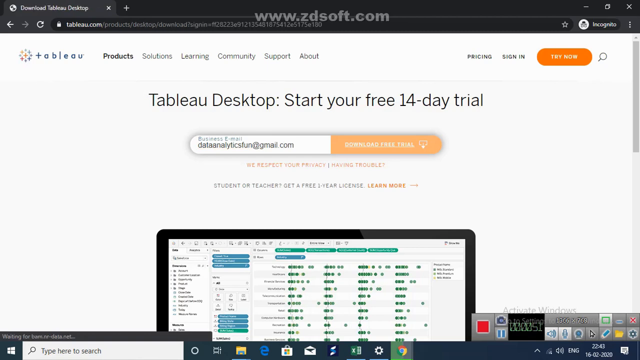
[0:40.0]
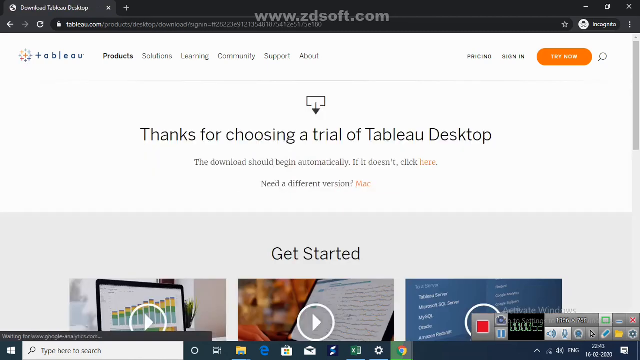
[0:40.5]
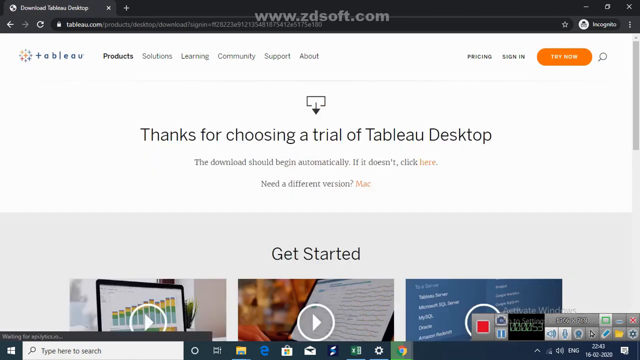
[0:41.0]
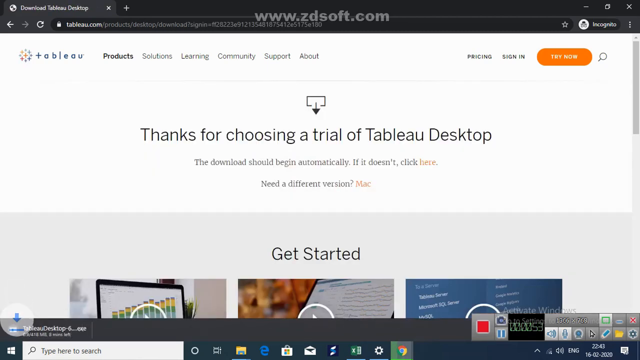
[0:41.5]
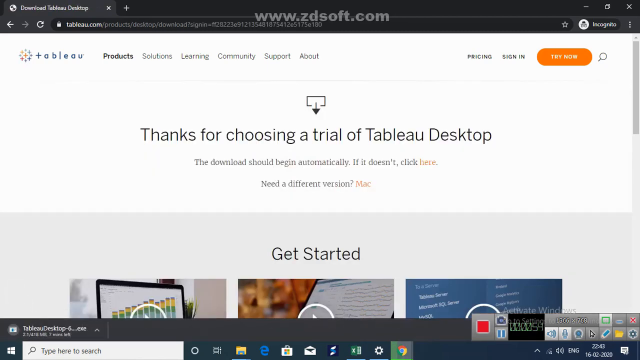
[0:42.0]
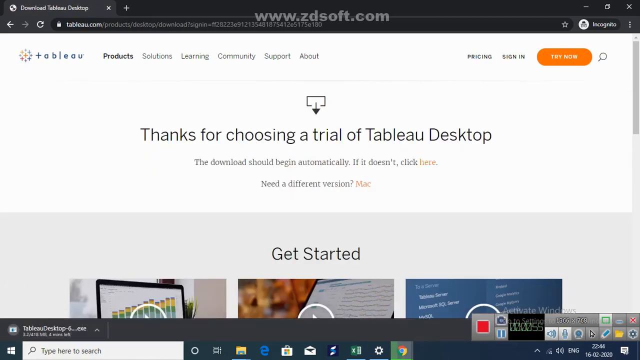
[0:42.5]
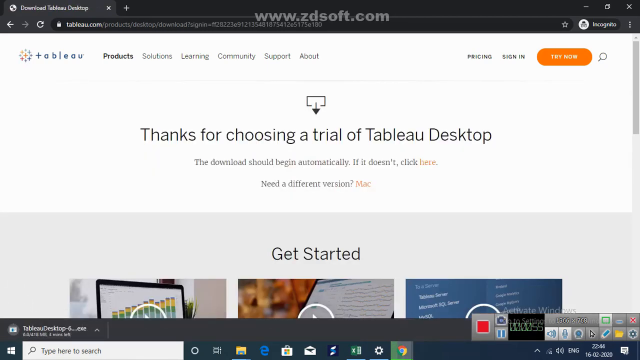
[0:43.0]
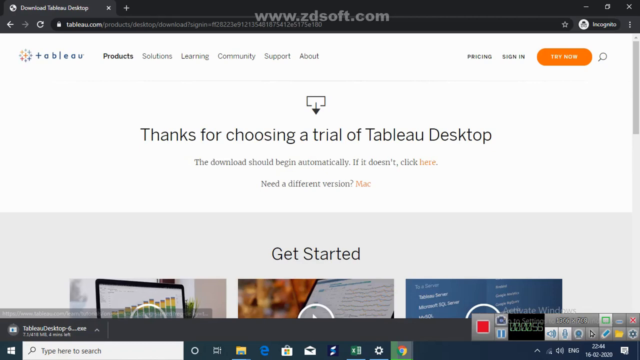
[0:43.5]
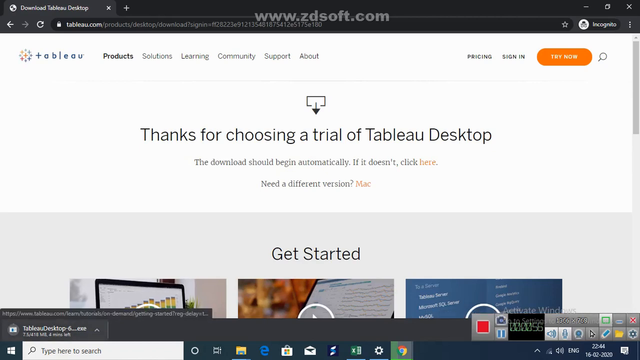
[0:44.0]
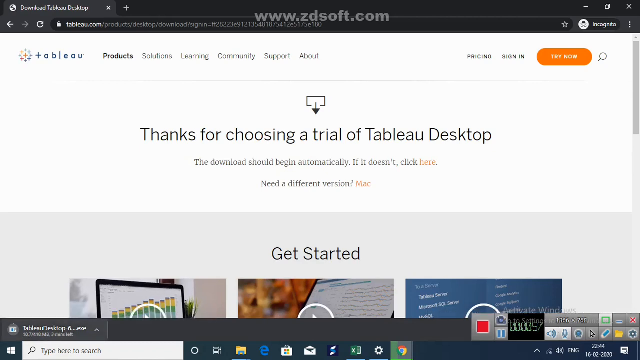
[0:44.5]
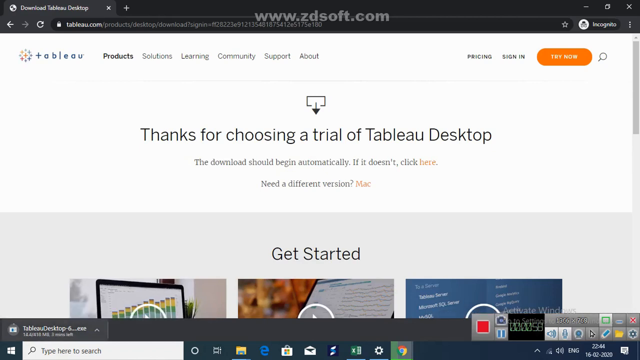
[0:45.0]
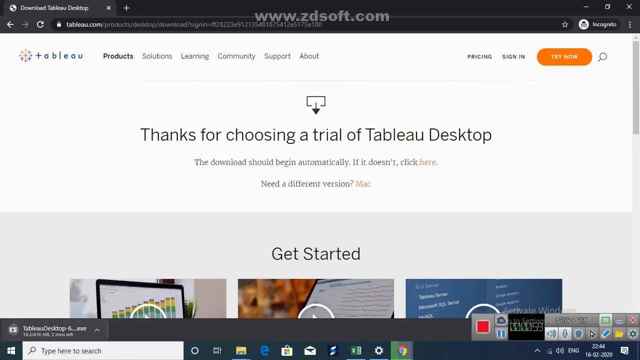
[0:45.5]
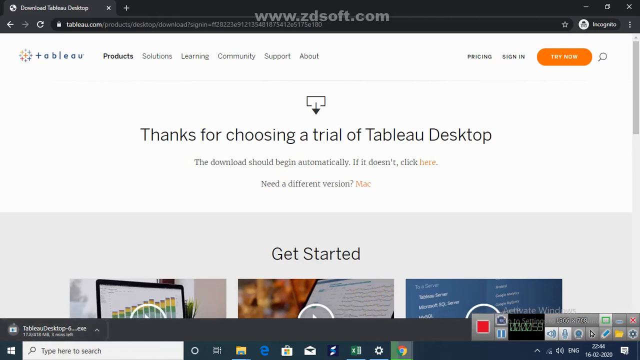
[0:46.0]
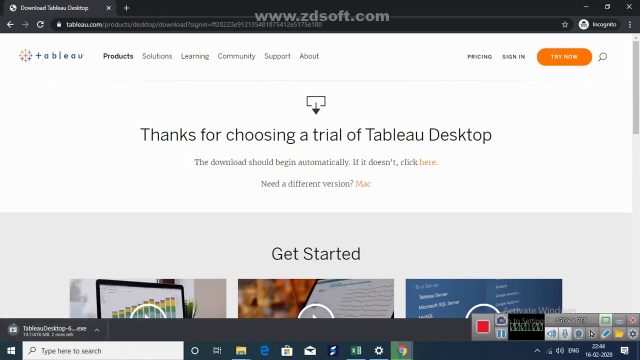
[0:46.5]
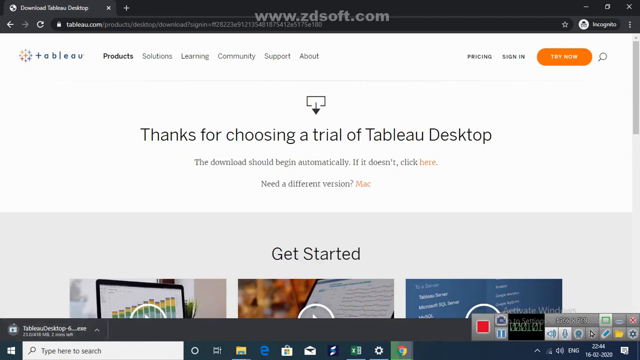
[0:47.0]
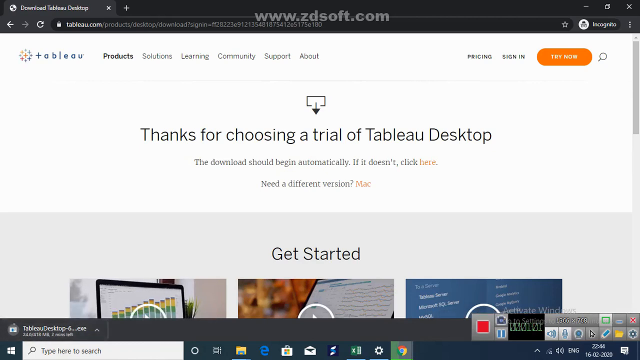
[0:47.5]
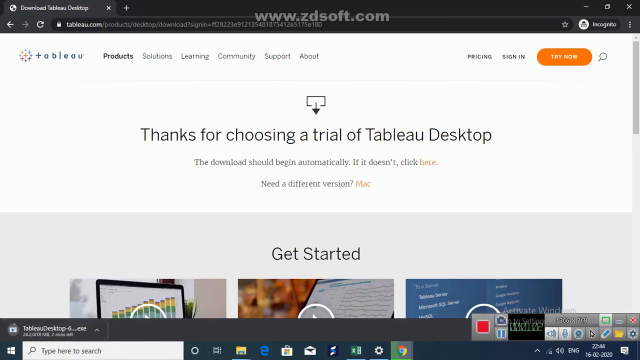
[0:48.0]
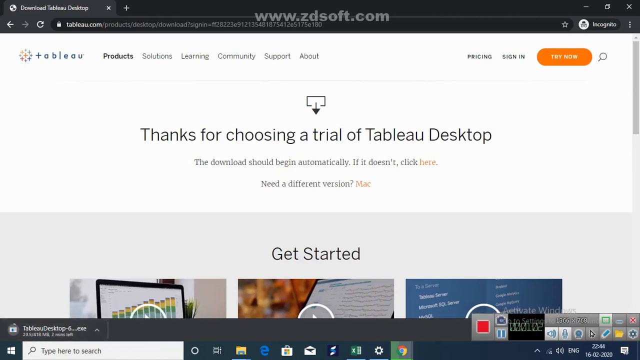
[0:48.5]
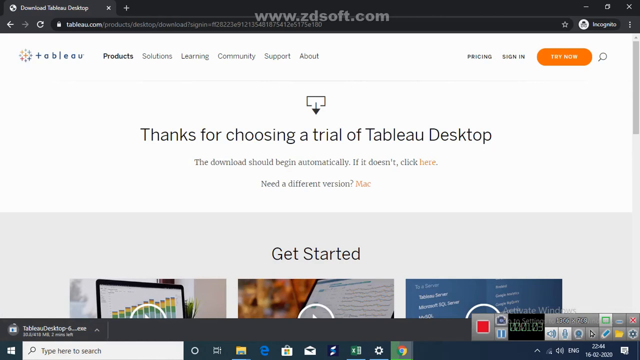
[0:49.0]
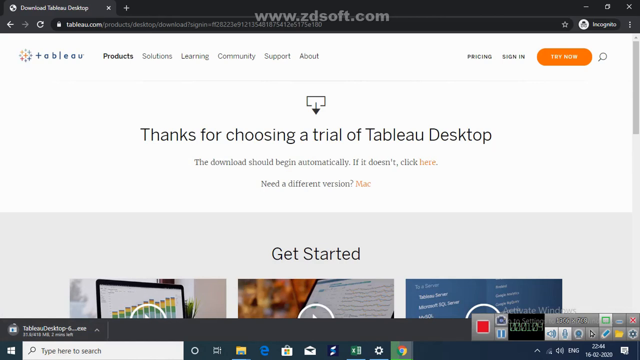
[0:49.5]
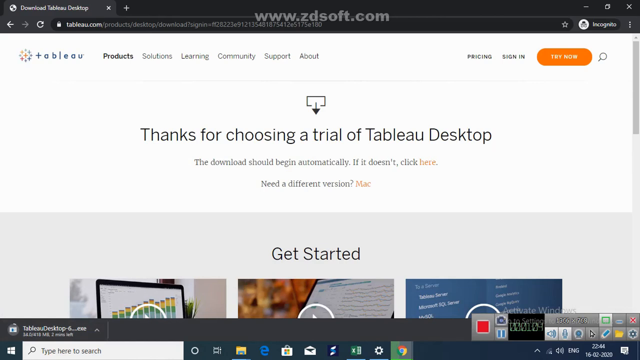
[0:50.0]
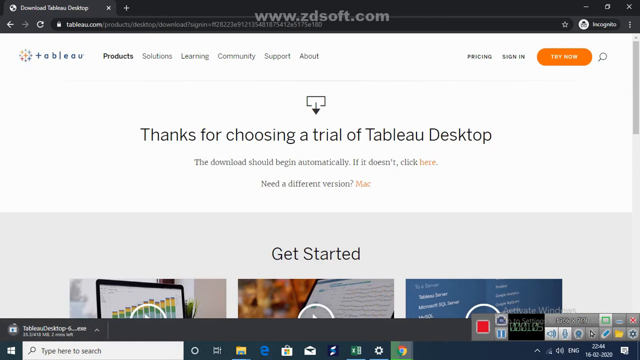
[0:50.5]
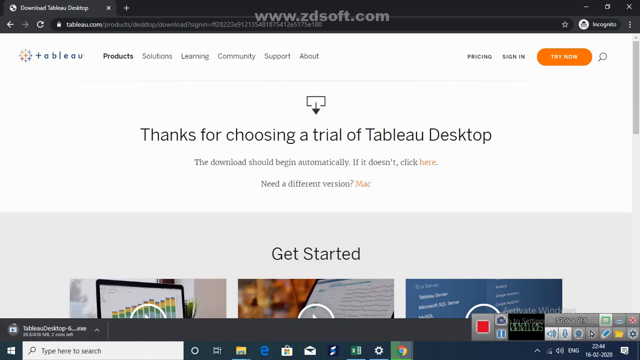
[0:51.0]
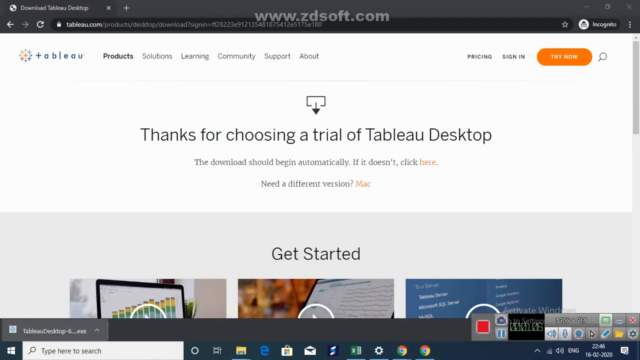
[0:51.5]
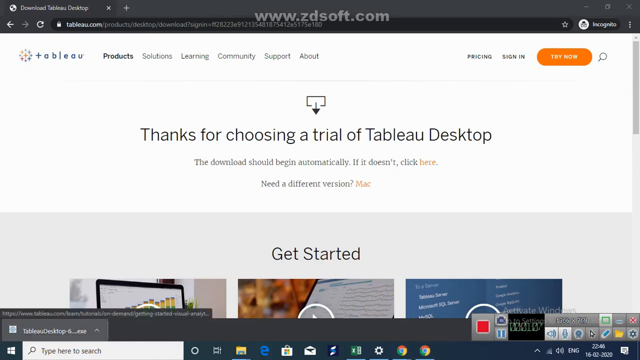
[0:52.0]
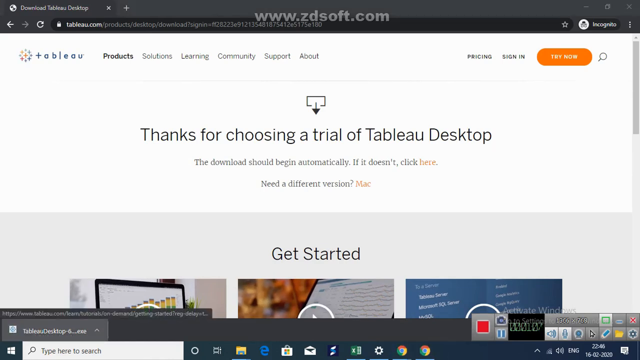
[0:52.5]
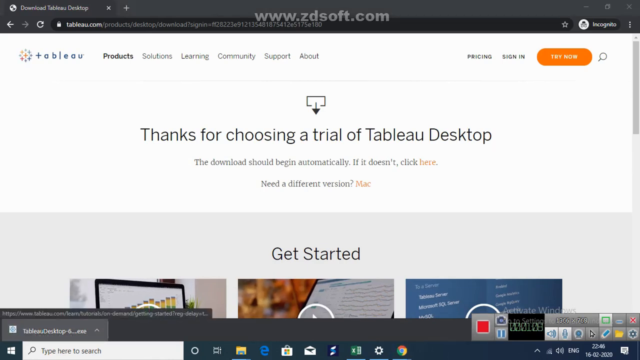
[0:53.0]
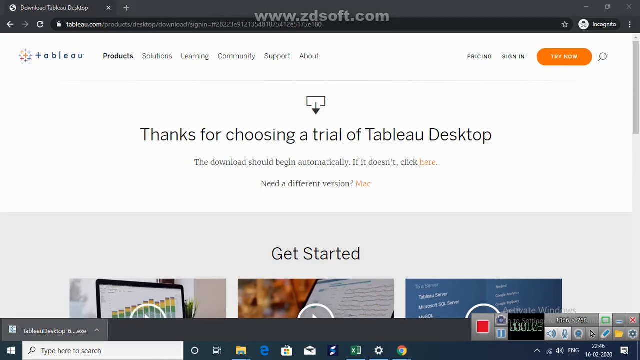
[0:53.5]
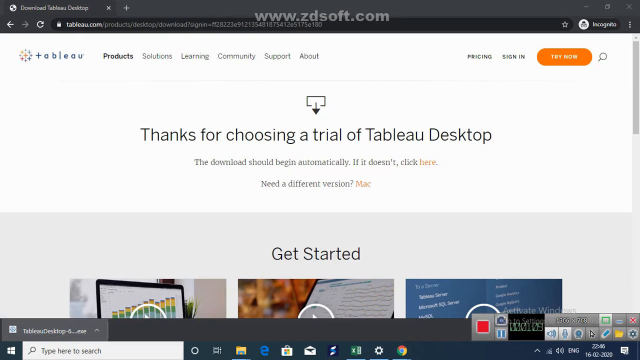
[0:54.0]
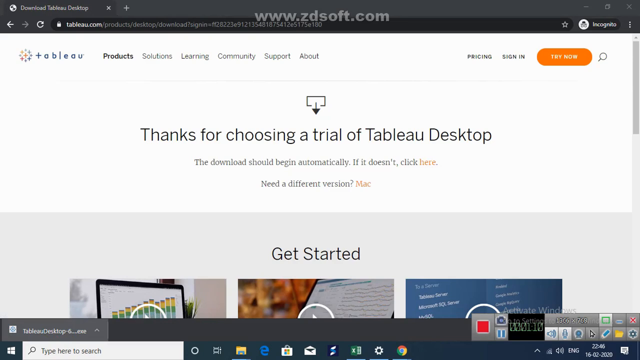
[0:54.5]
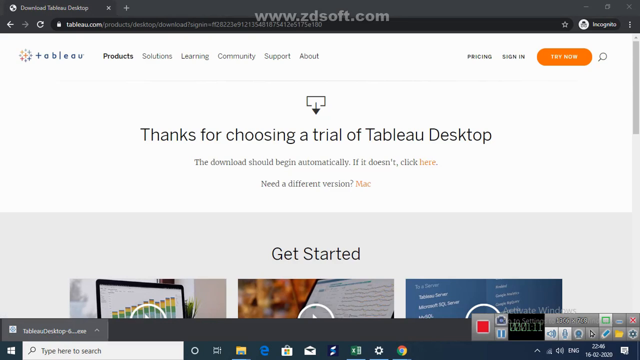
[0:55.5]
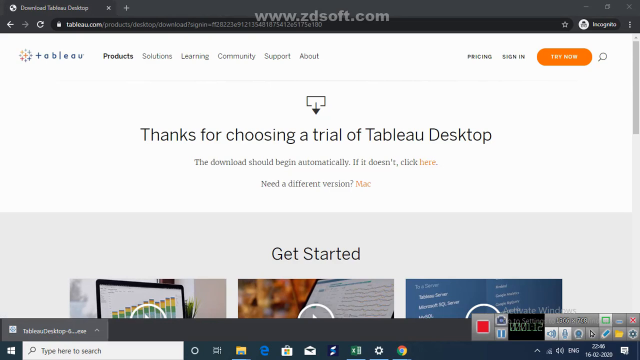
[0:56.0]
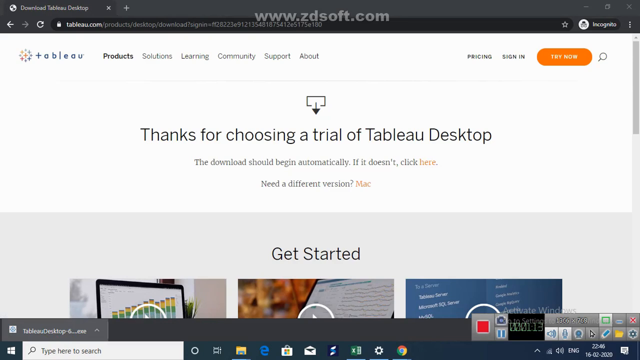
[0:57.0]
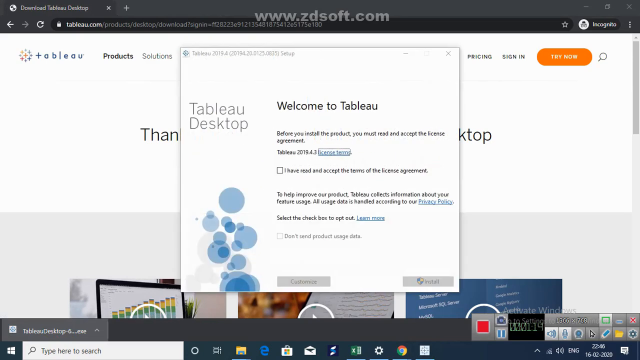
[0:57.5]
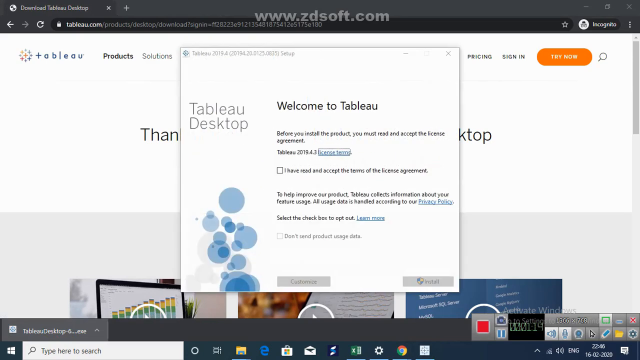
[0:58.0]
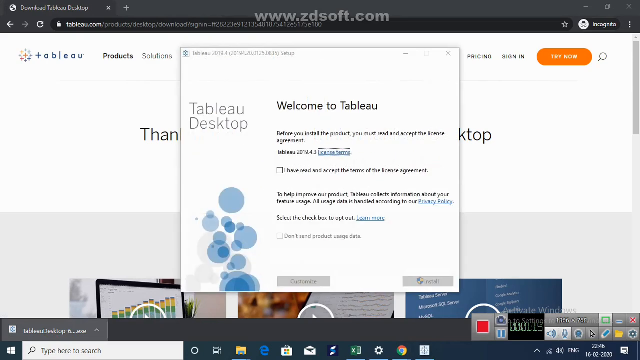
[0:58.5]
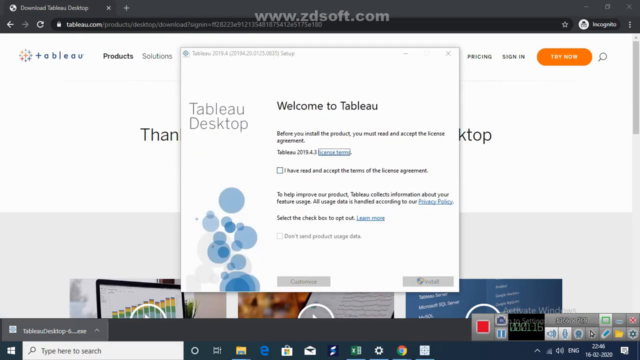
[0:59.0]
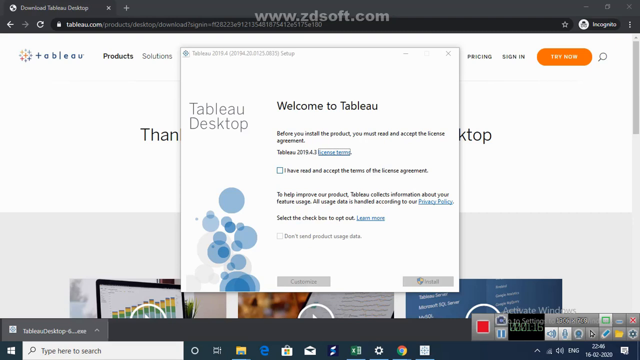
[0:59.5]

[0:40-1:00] A webpage with a white background shows "TABLEAU" in black letters at the top, and to its right "desktop, start your free 14-day trial". Below that is a field containing an email address beginning "DALAANAY" and ending "gmail.com", not all of it legible. To its right, "download free trial" appears in orange. A depiction of a computer screen at the bottom disappears and "get started" appears. More content pops up at the bottom of the screen, including three pictures below "get started" showing computer screens, and the mouse seems to possibly be clicking on one of them. At the bottom are an Internet Explorer and a Windows shop page. The URL is at the top of the screen, the open tab is at the top left, "incognito" appears in white letters on the right, and a white X is at the top right of the screen.